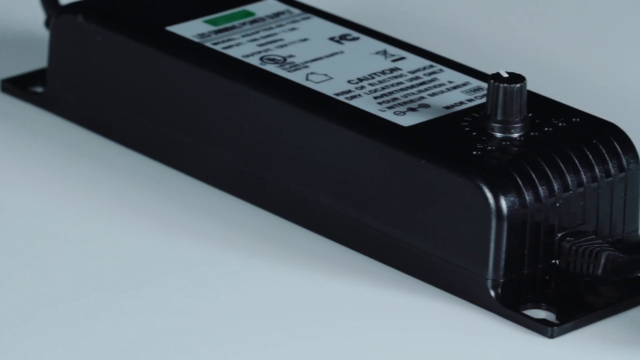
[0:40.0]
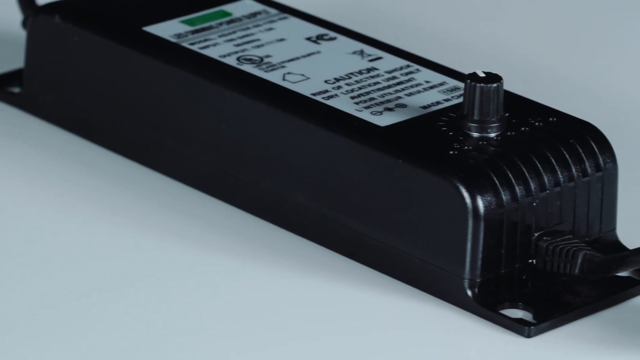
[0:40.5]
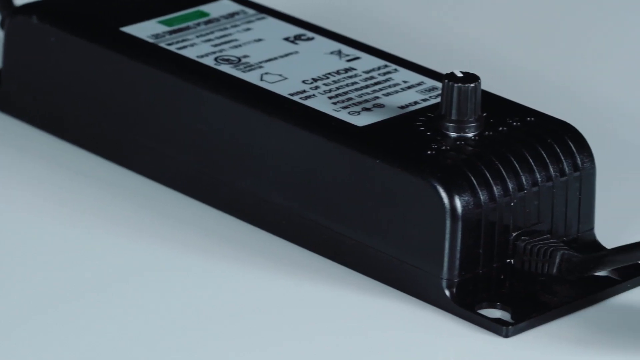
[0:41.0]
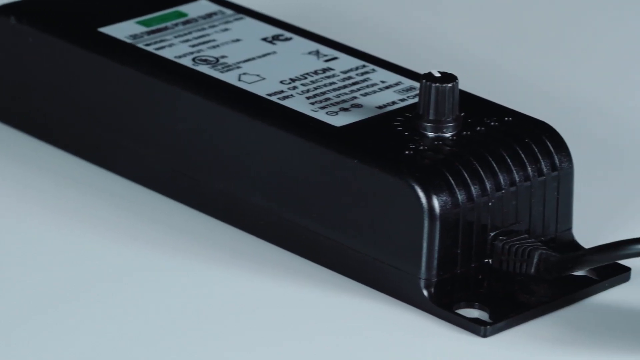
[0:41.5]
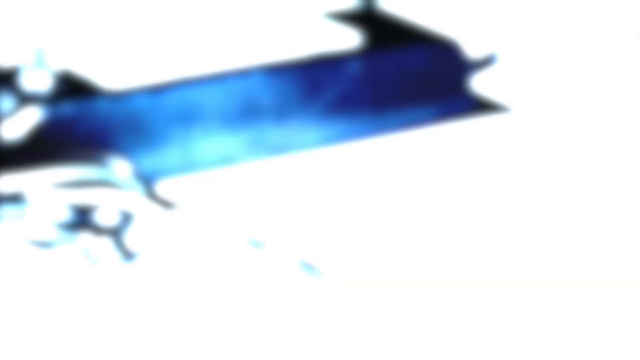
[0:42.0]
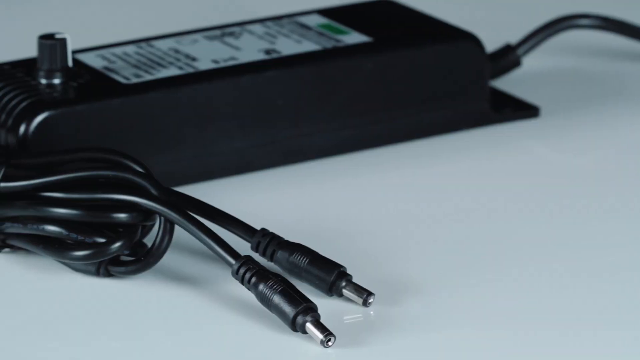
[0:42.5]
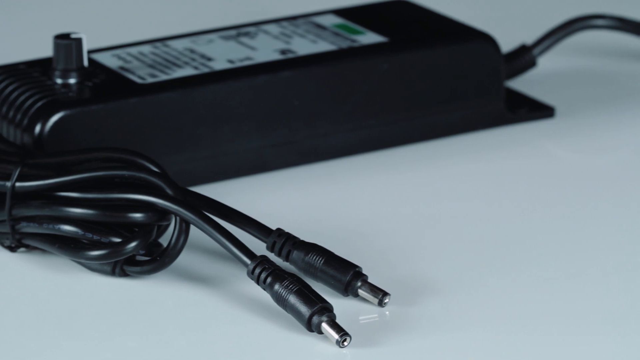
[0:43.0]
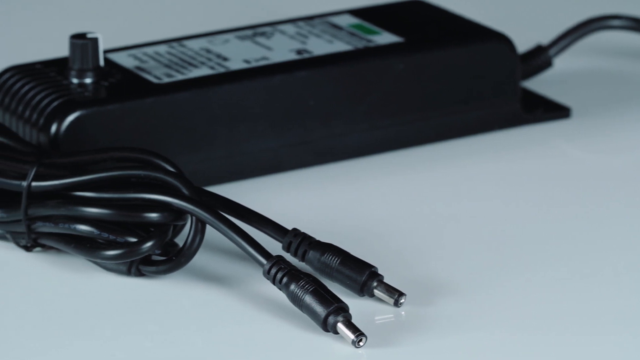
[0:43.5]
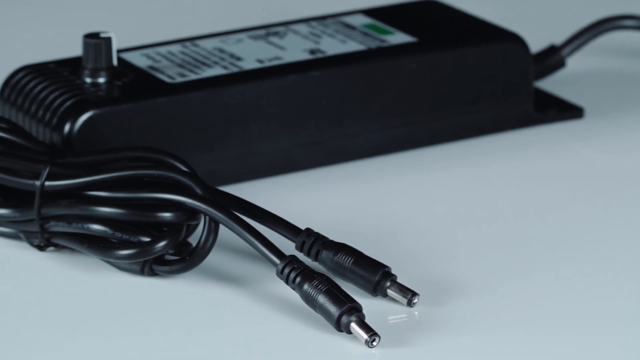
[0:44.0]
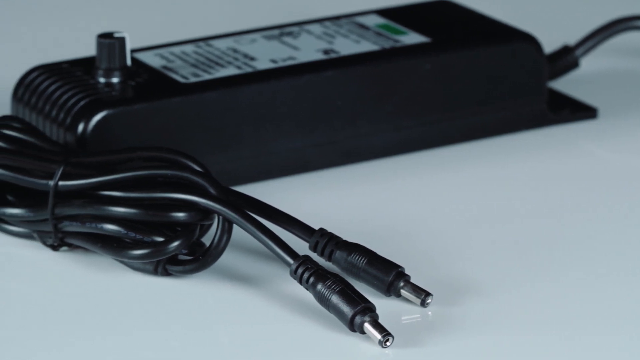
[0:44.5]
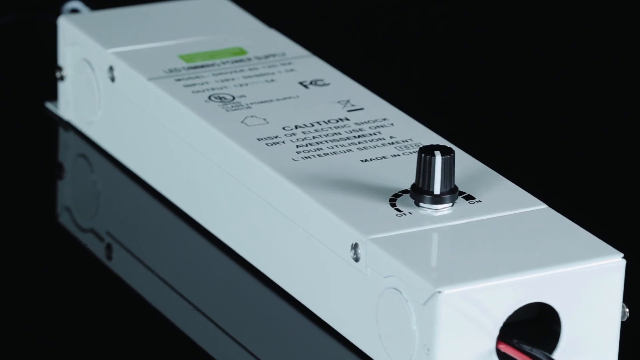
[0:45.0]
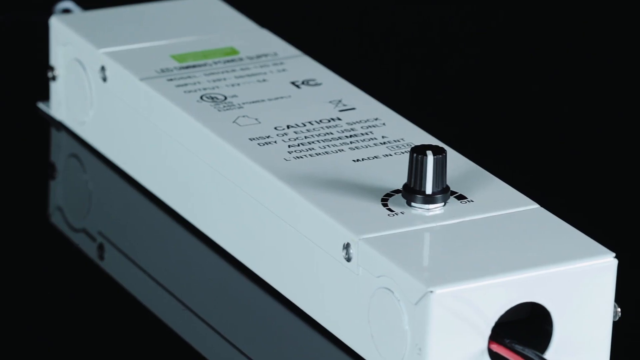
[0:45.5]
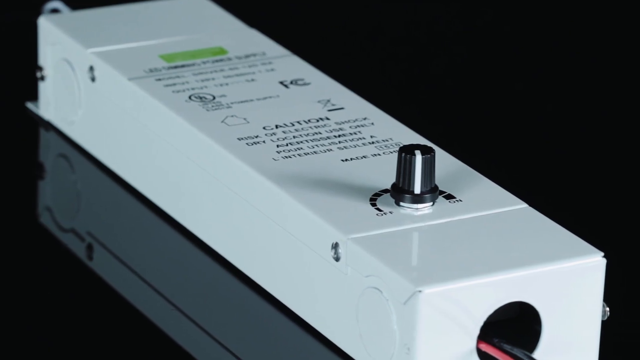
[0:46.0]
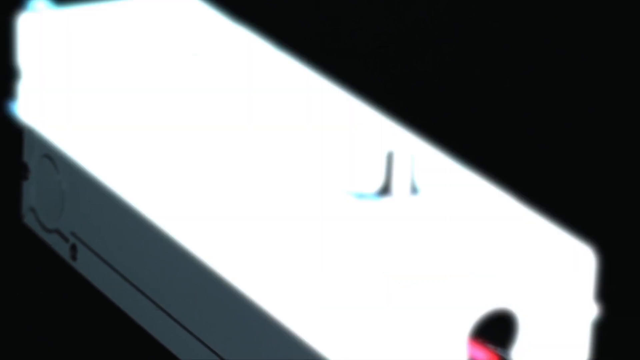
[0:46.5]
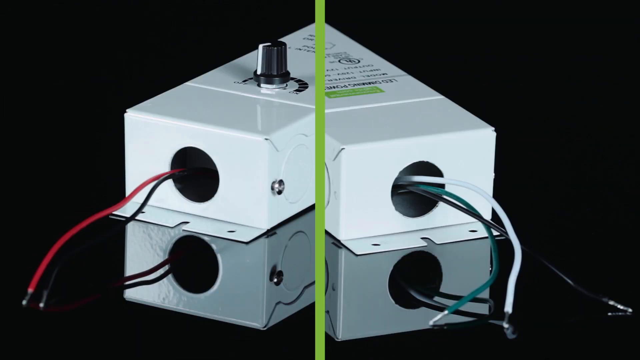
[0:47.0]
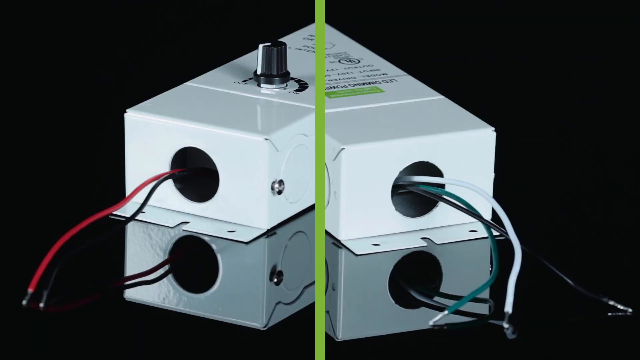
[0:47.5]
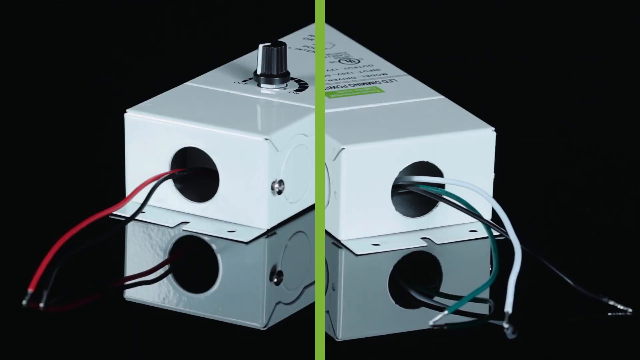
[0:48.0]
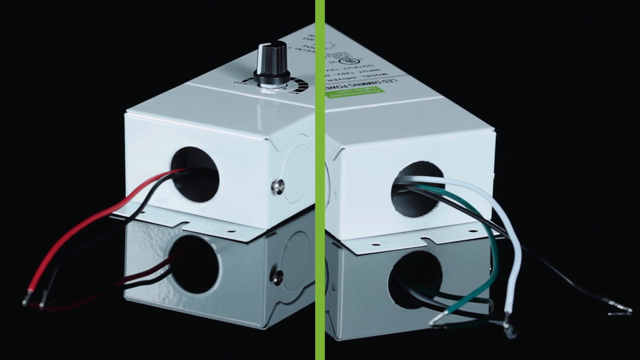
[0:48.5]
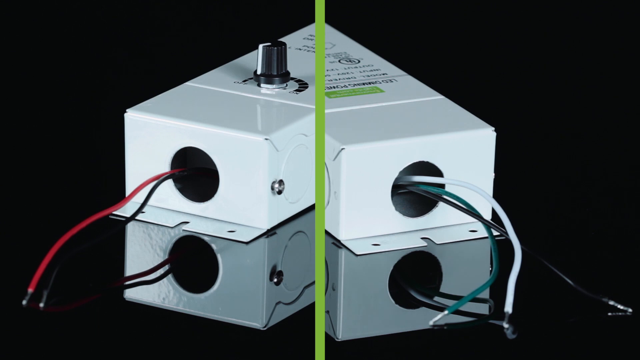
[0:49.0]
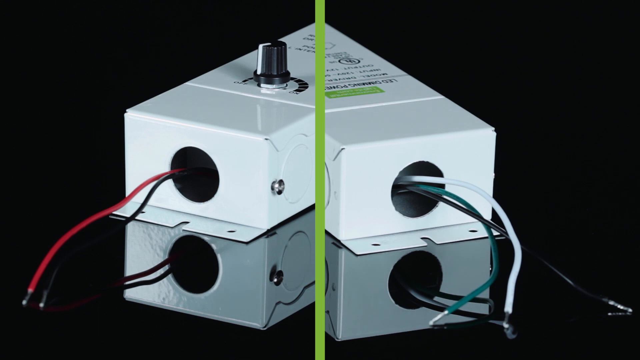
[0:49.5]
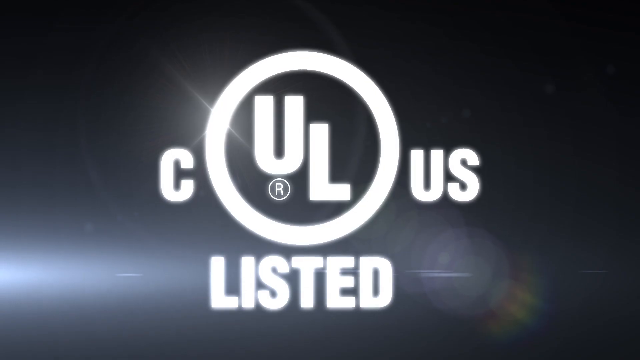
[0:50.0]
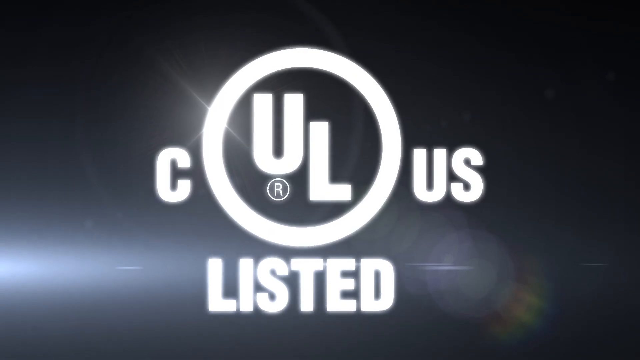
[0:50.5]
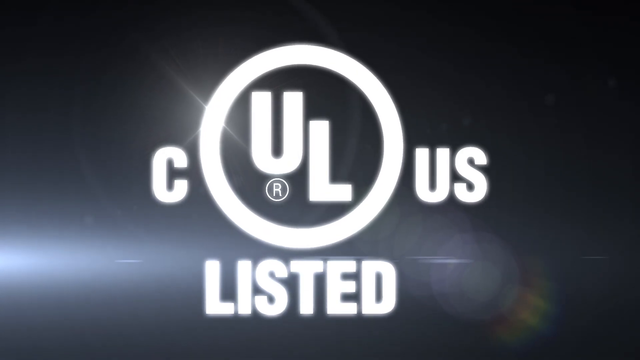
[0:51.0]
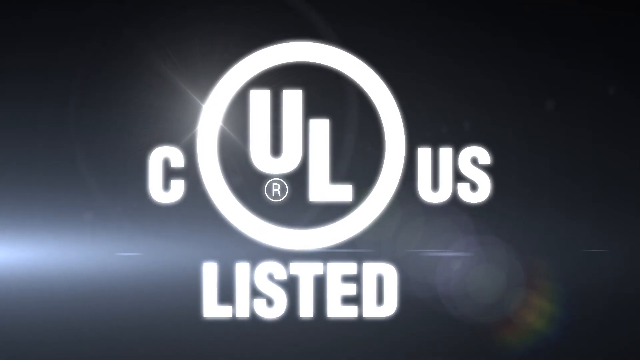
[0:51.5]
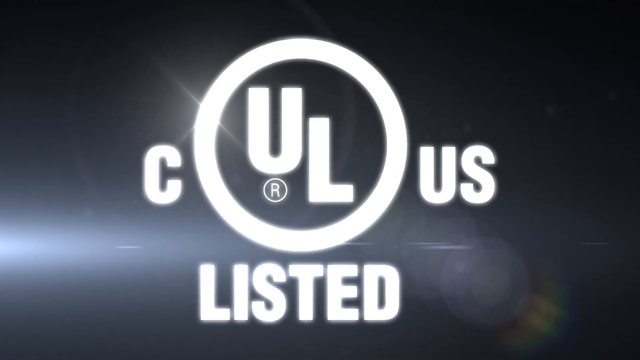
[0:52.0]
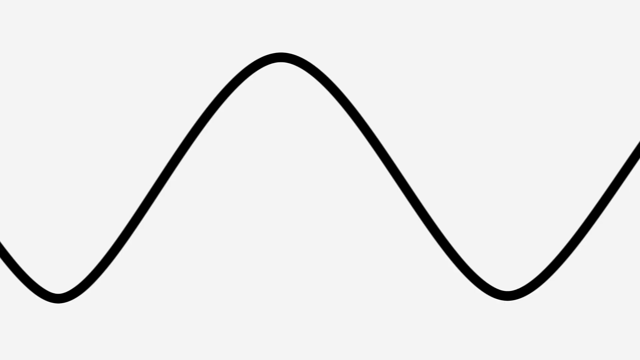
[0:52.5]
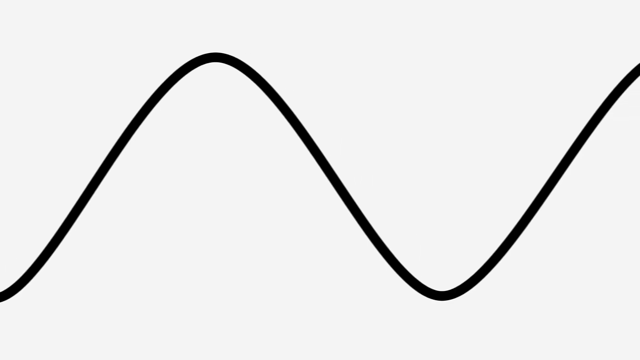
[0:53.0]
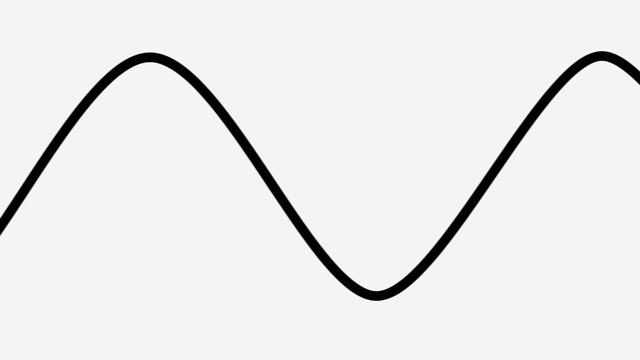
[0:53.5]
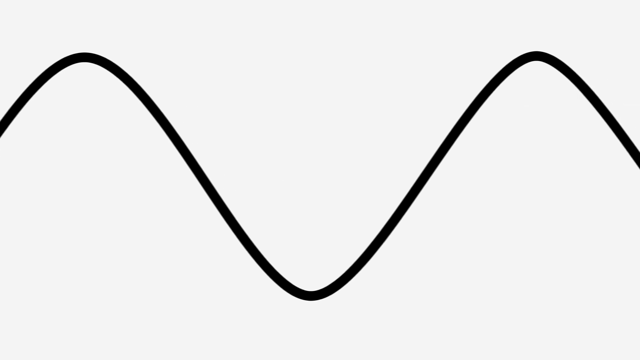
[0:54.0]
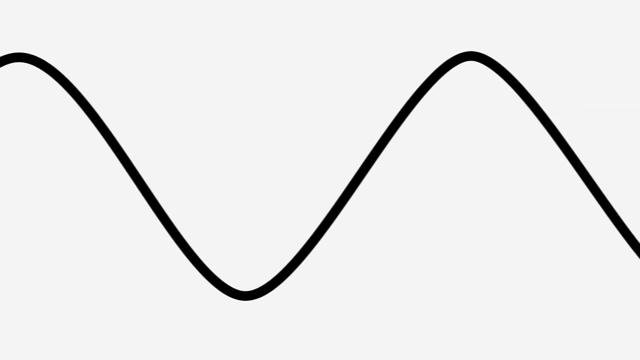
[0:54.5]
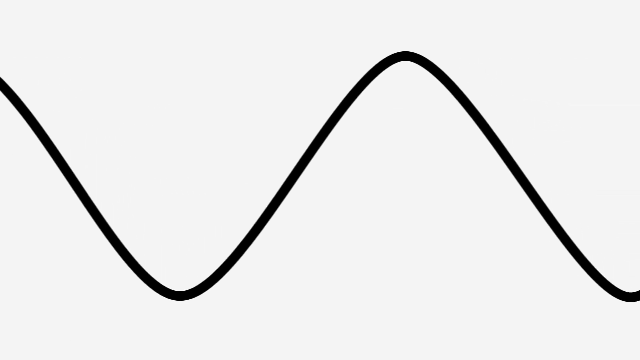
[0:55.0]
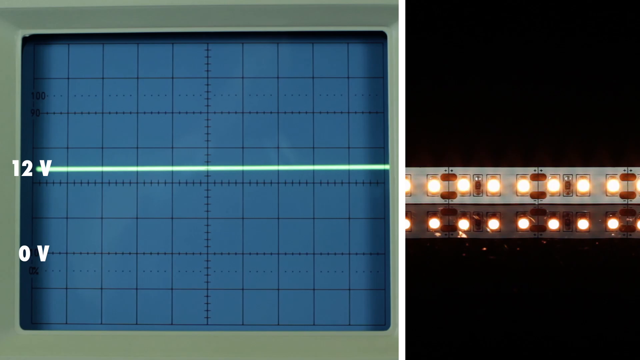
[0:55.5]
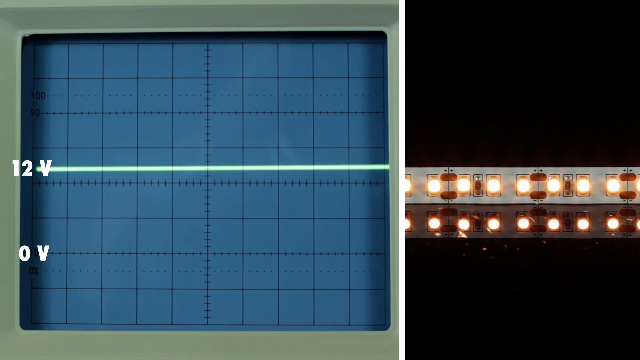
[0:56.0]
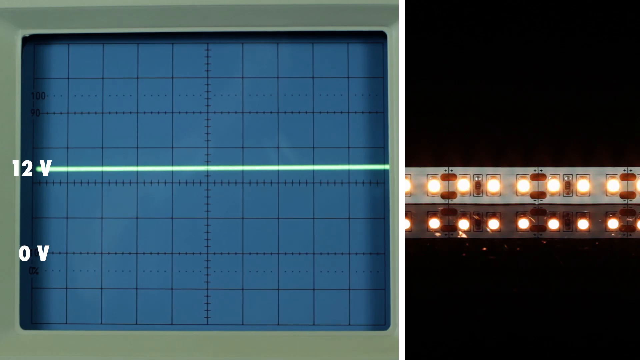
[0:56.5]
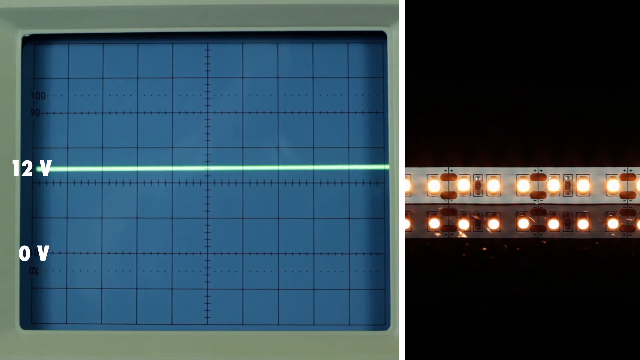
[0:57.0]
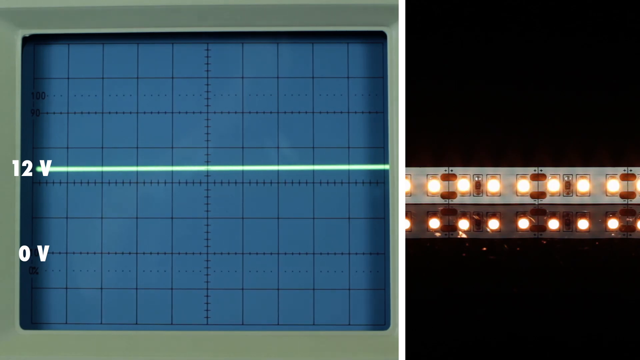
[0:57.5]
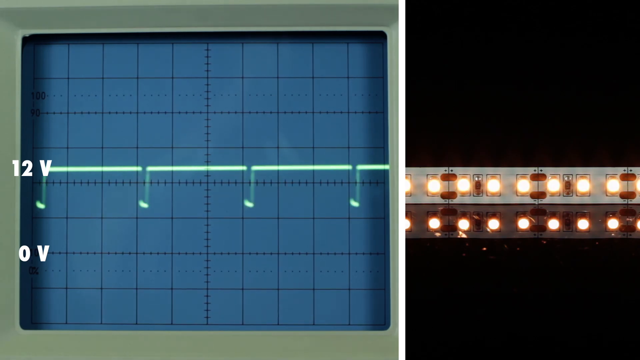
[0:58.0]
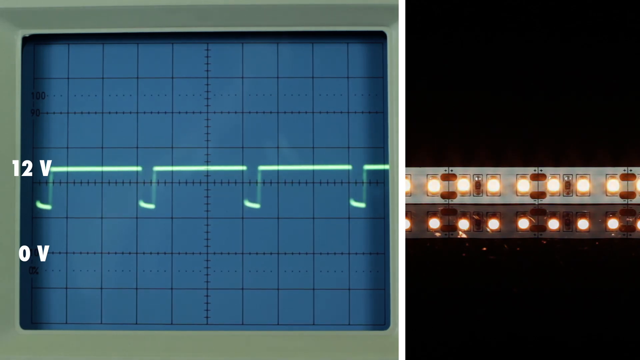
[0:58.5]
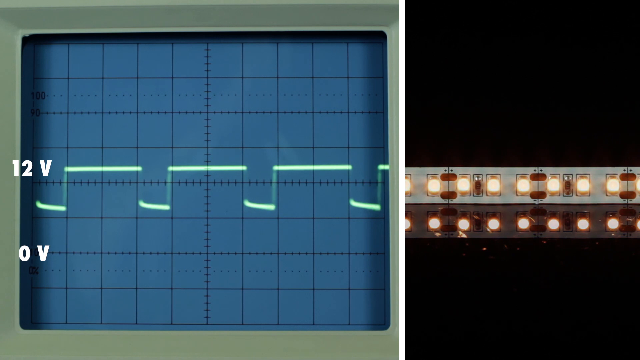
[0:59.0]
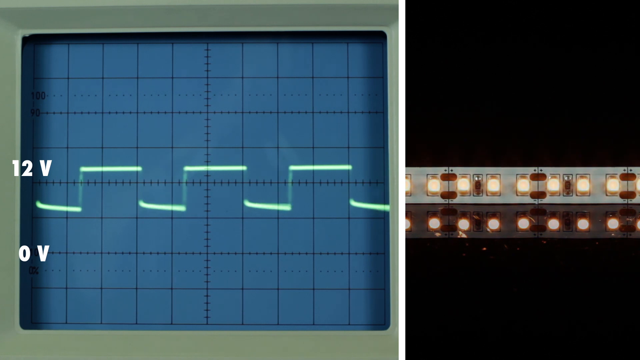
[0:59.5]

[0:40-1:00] A black tool, apparently an adapter, is shown. Then the same tool appears, and it seems to be a converter or something similar. The electrical process of how it works is shown.